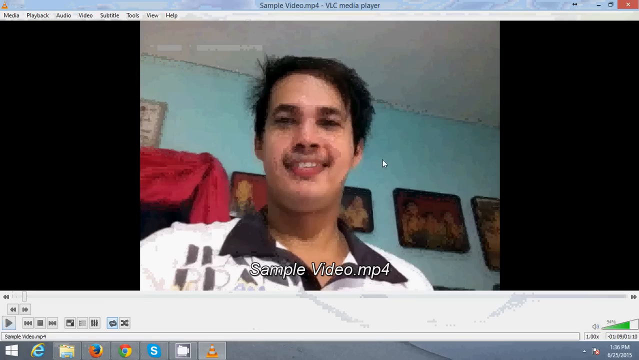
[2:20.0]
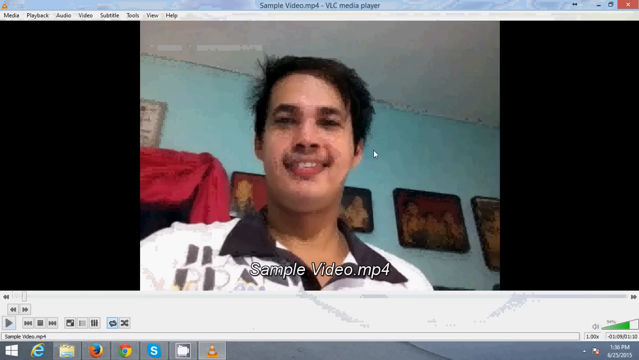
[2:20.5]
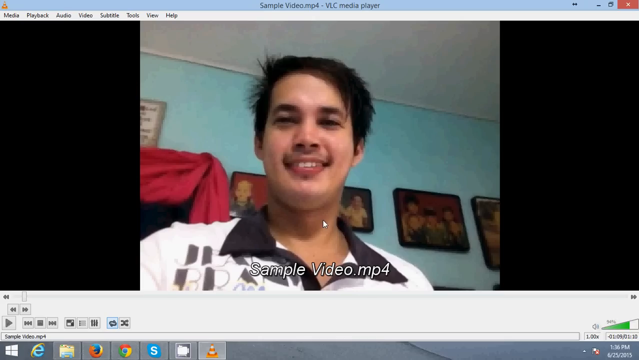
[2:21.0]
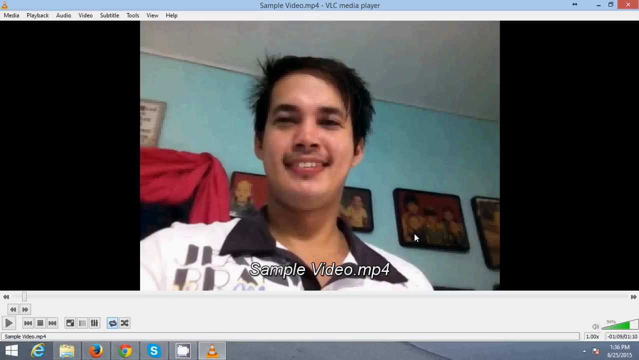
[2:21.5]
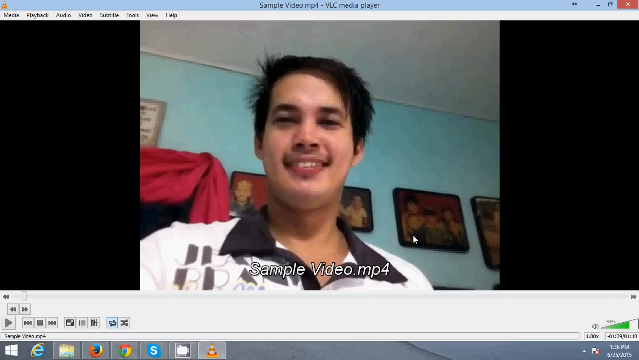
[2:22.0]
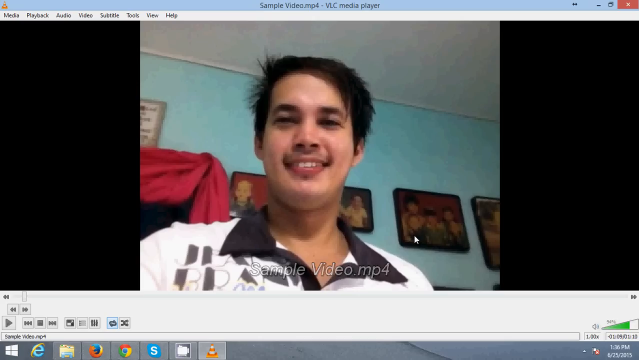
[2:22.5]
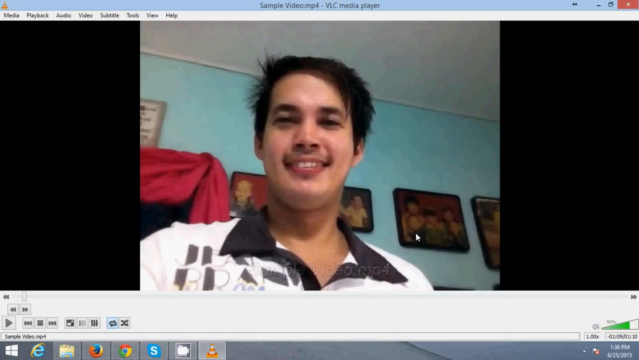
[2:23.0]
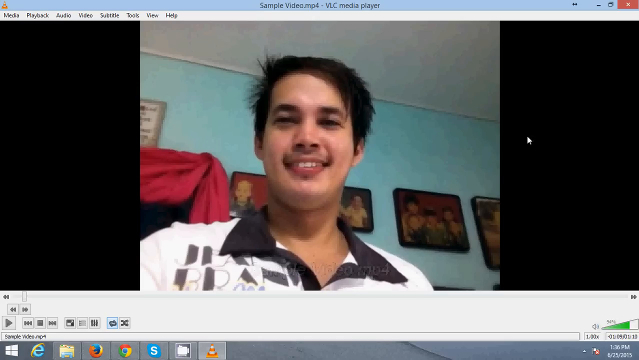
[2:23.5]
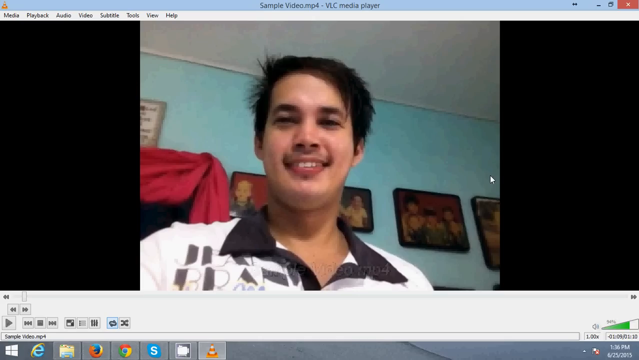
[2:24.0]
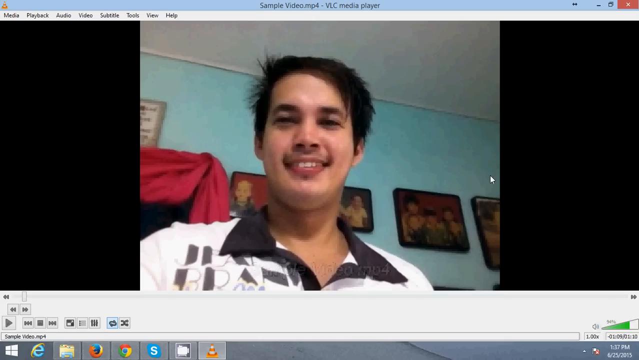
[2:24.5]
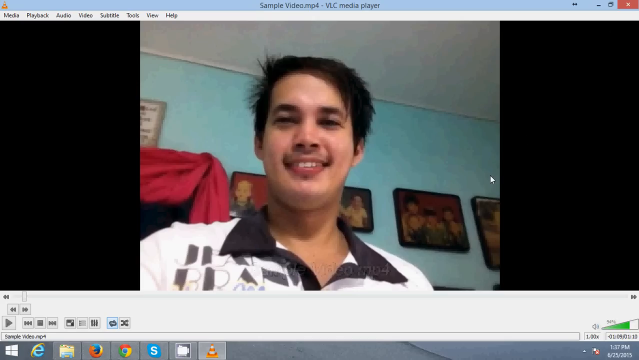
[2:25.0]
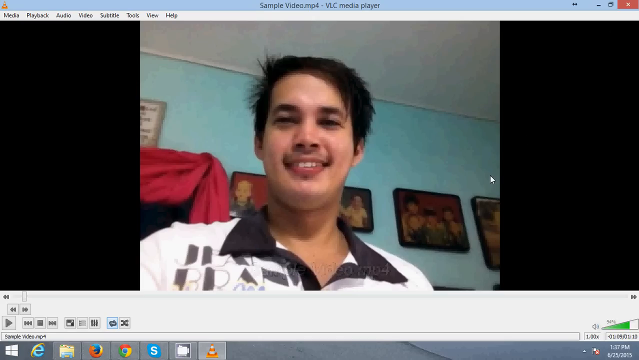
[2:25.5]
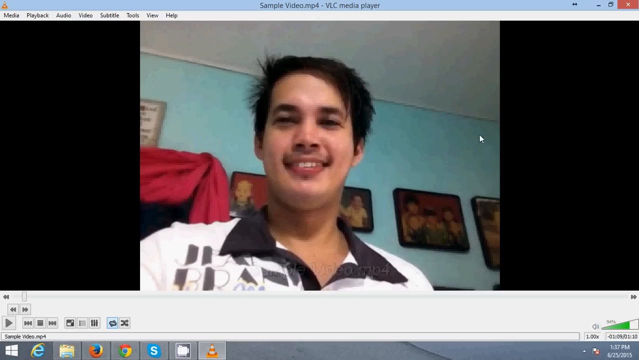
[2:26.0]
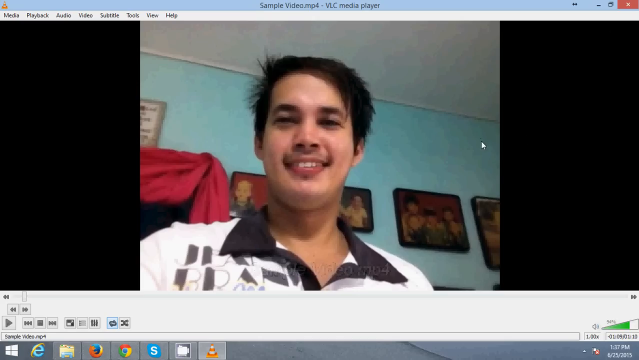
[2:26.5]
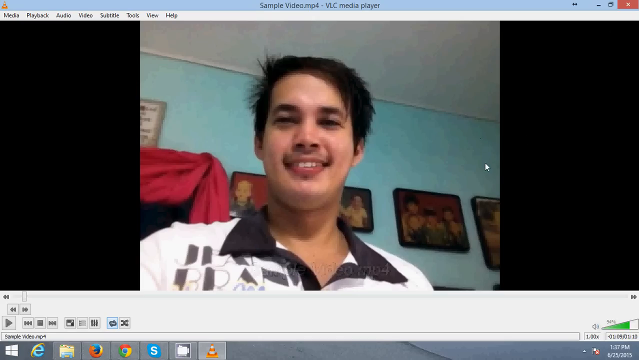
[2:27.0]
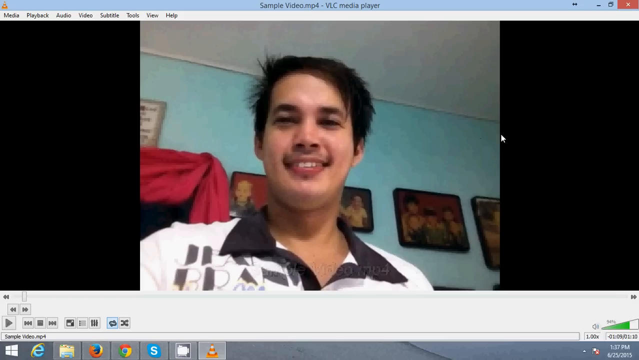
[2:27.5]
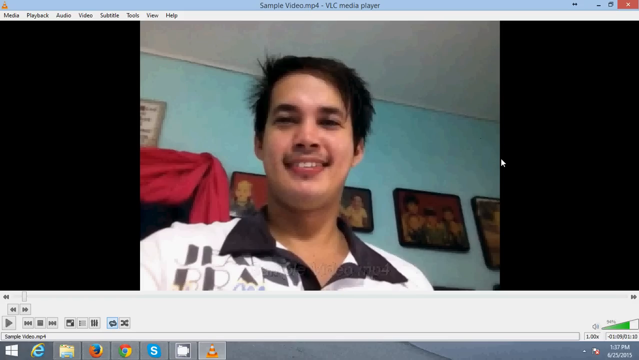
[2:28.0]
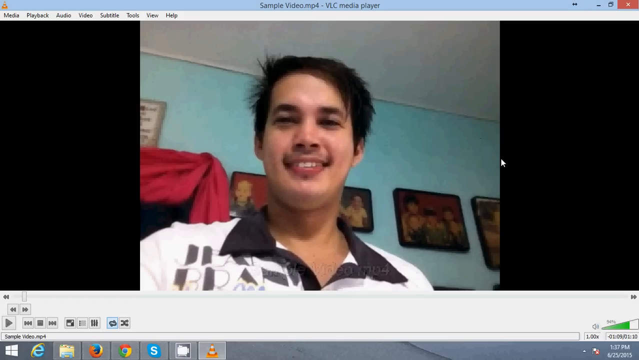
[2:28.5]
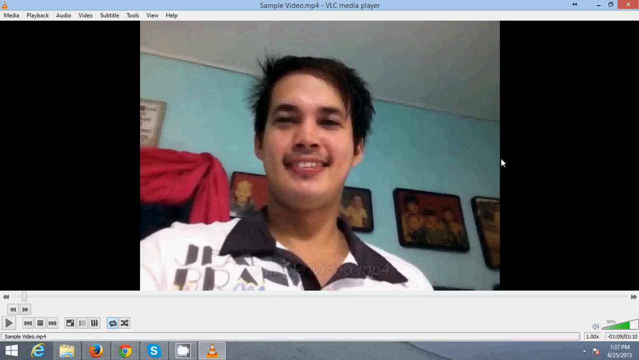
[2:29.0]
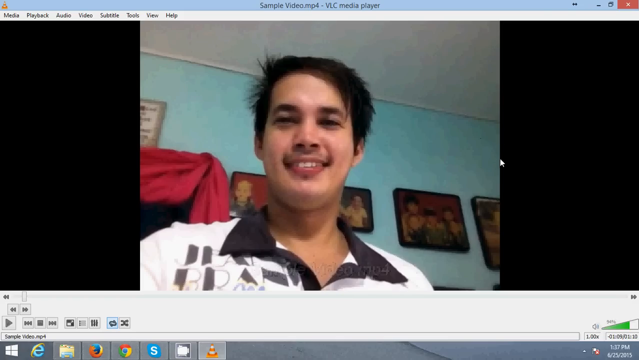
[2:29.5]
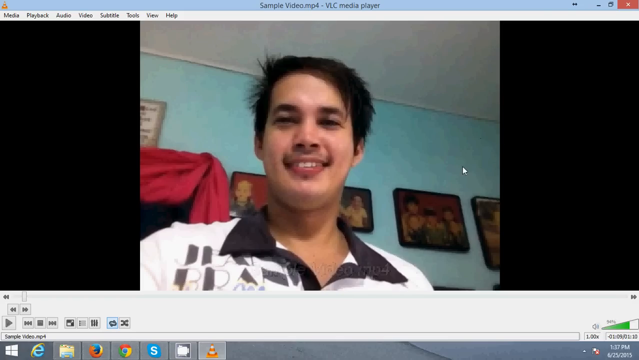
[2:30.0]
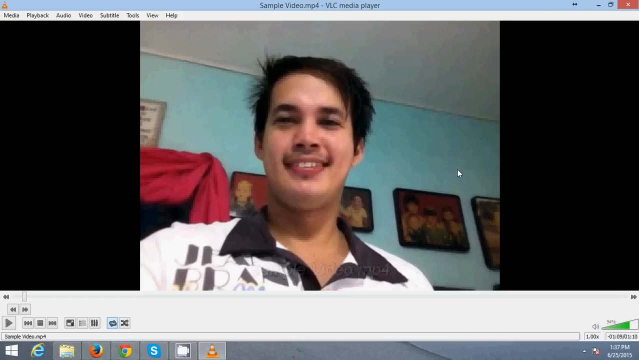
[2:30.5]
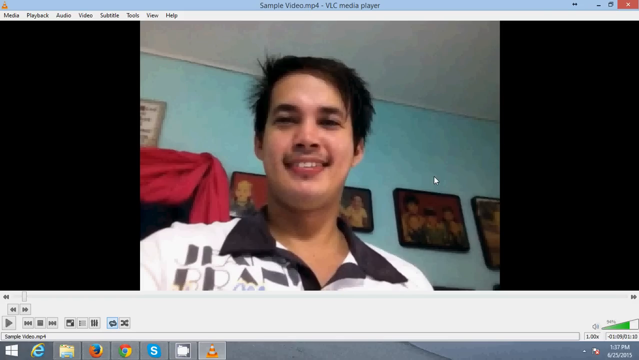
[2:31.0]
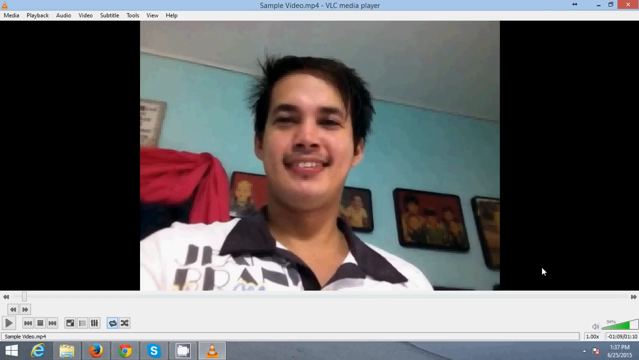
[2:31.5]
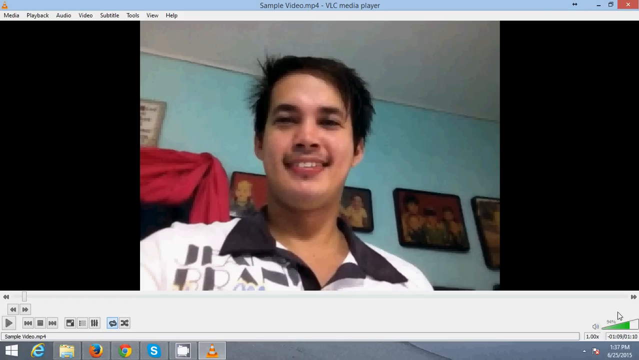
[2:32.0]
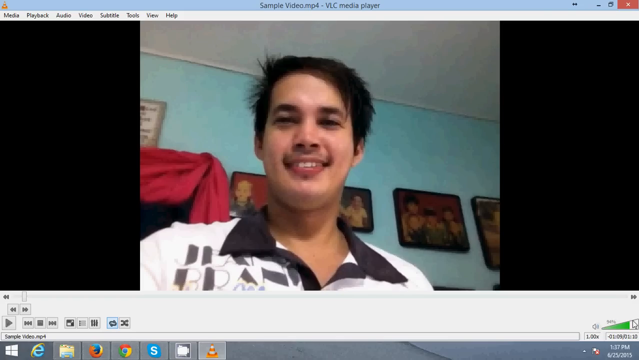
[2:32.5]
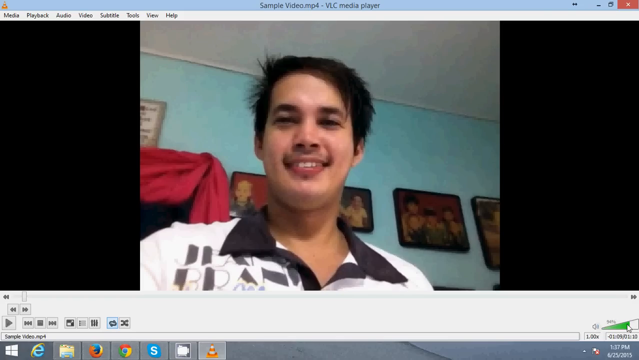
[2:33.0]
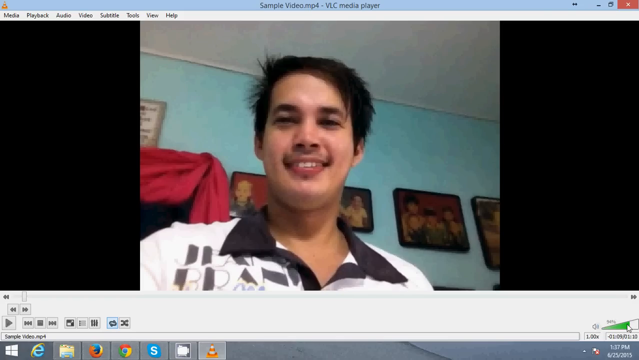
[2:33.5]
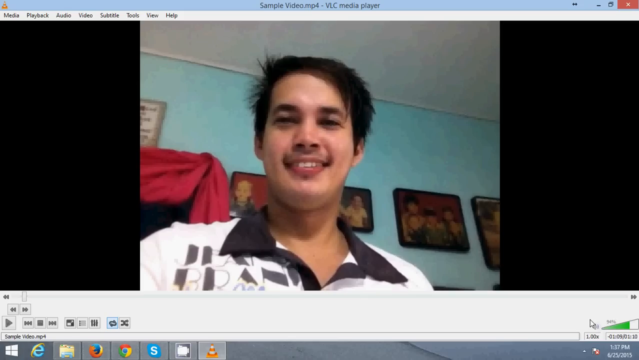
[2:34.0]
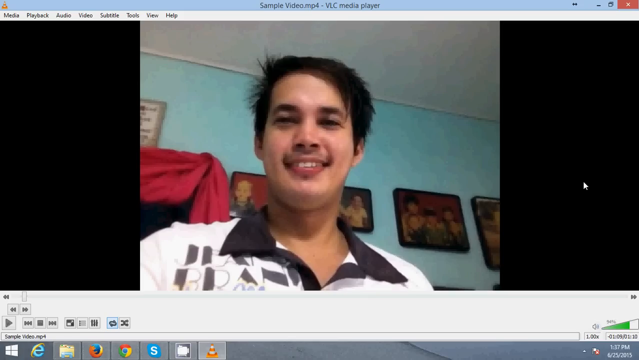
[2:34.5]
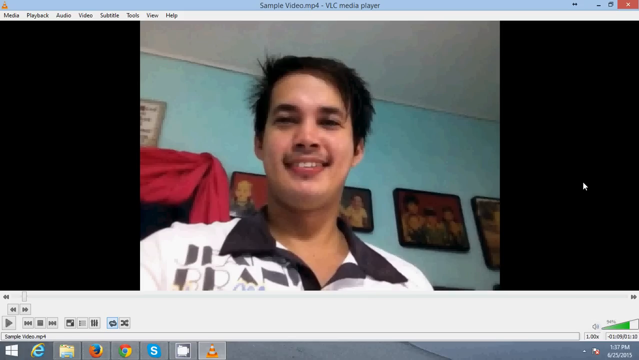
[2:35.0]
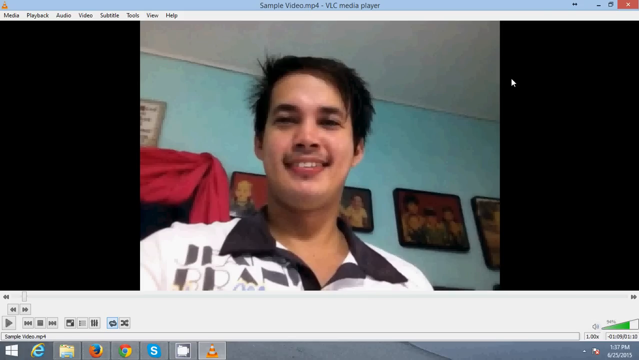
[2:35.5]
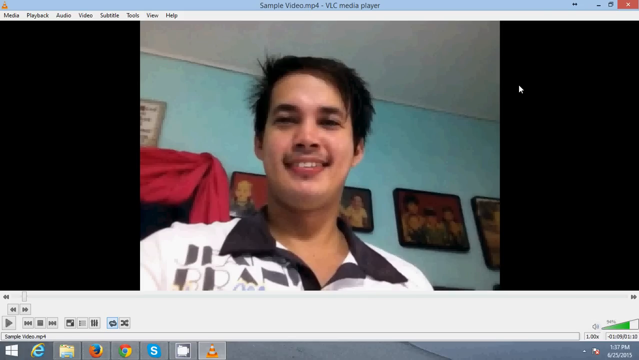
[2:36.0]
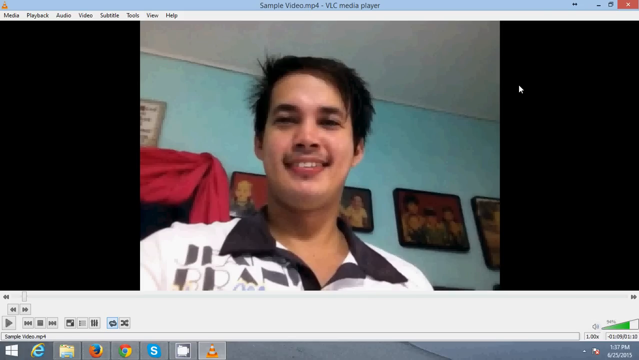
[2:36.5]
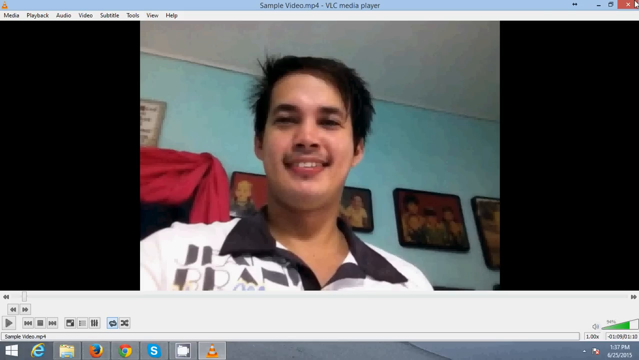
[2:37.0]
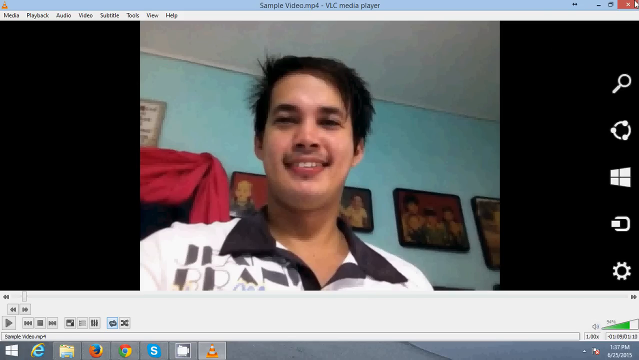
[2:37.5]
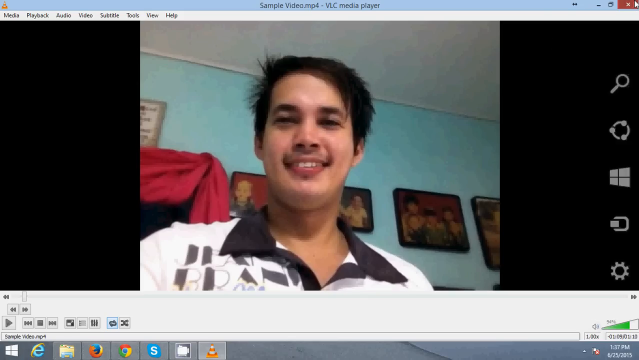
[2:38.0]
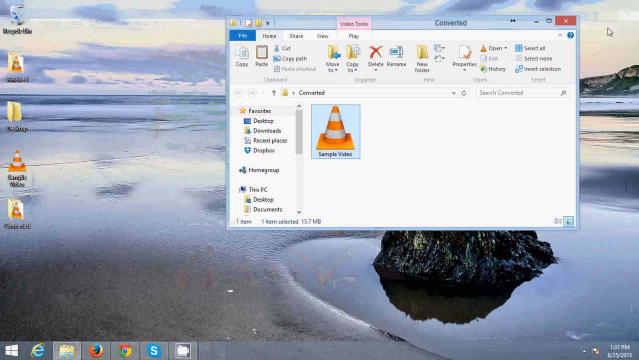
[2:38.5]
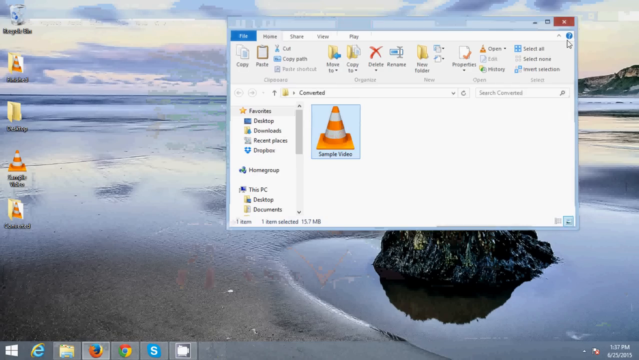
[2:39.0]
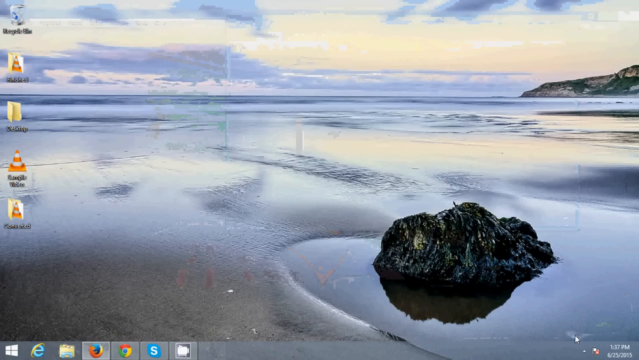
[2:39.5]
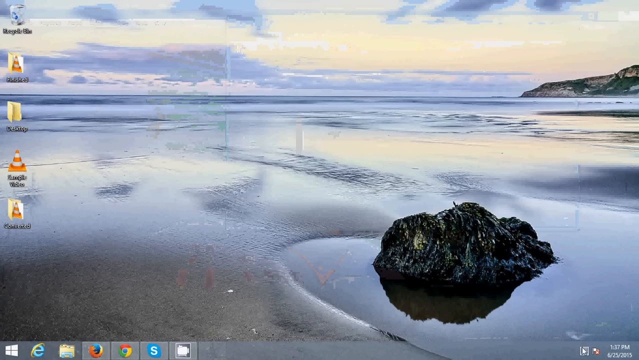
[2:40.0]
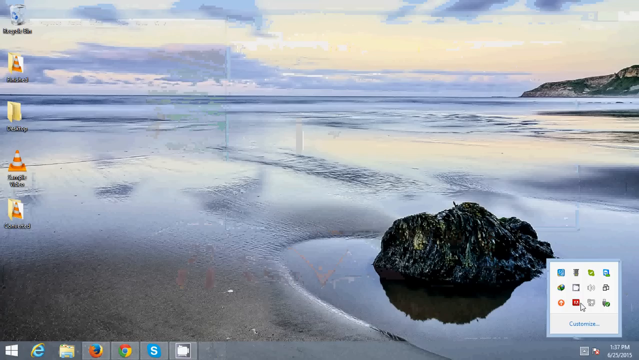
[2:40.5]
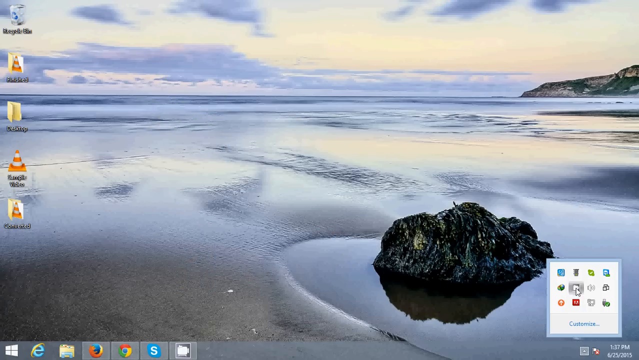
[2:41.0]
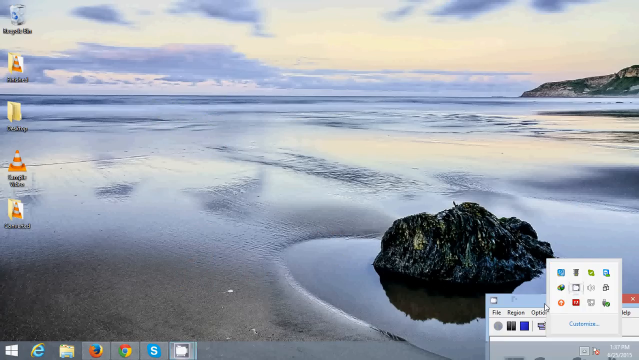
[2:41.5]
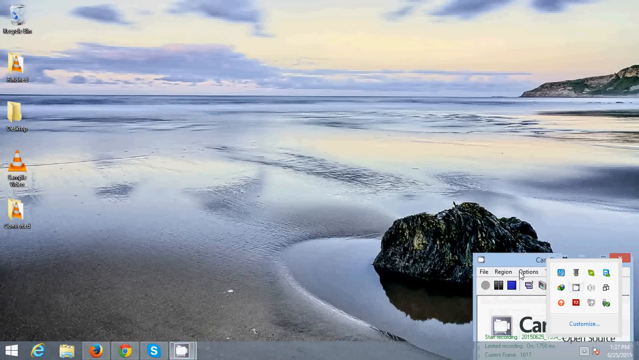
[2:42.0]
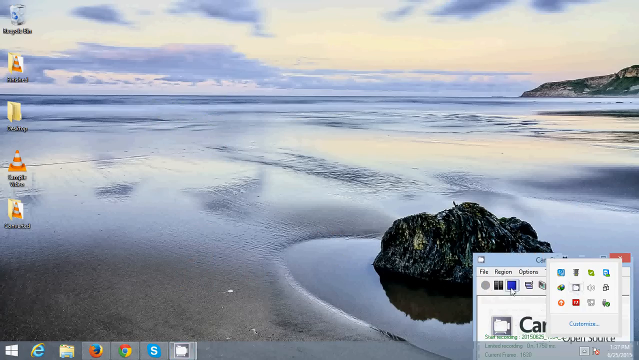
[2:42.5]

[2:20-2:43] The opened video is shown in the horizontal format, with the person now the right way up: the same man in the white t-shirt with a black collar, smiling at the camera. The video is not playing. The white mouse cursor moves around the screen and then to the bottom right-hand corner, where there is a volume icon with a small ramp with green filling showing the volume level. The cursor moves over it, goes back to hover over the video, and then goes to the red exit button in the top right-hand corner, which is clicked, closing the video and returning to the folder containing it. The mouse then goes to the red X in the top right-hand corner of this folder, closing it and returning to the desktop picture of the beach and the sea. Another icon in the bottom right-hand corner is then clicked, bringing up another box in the corner, which is difficult to make out but appears to open another folder.